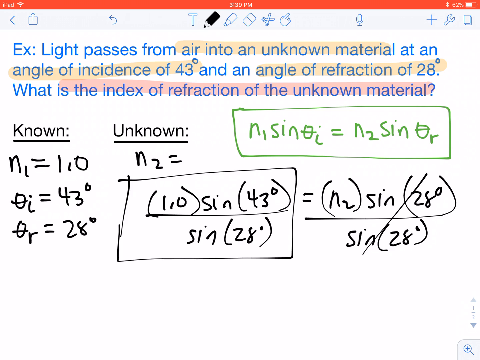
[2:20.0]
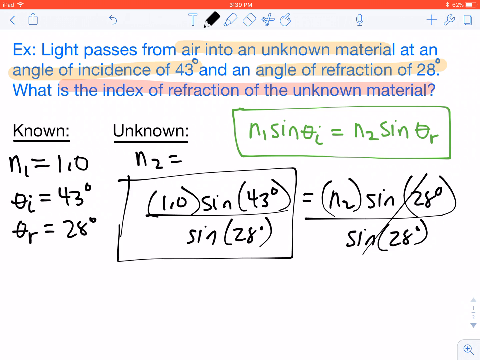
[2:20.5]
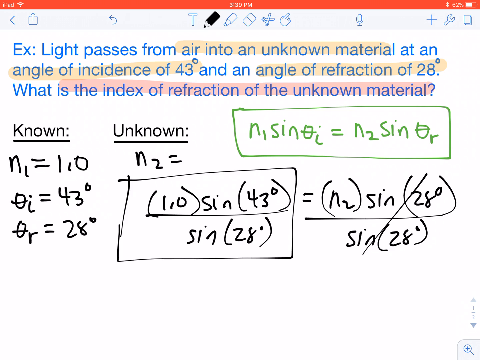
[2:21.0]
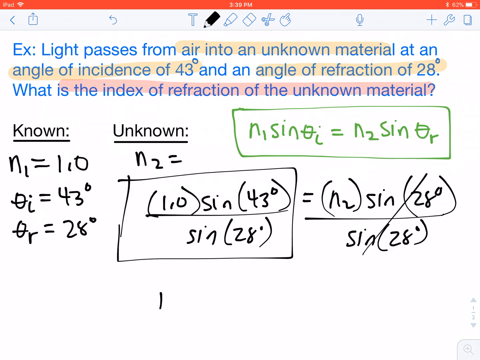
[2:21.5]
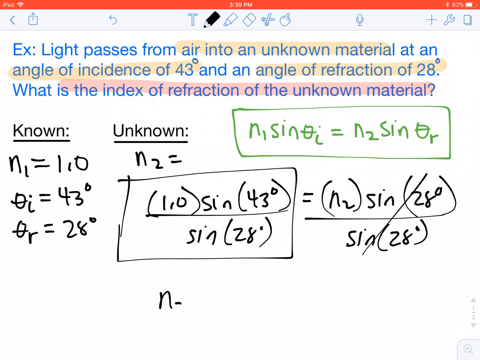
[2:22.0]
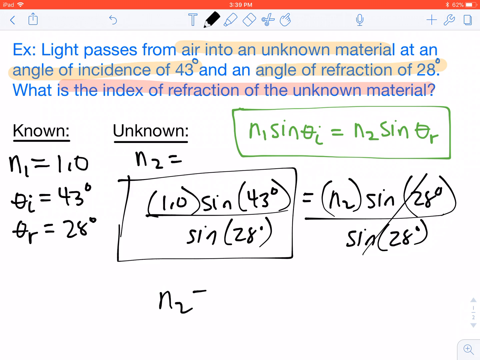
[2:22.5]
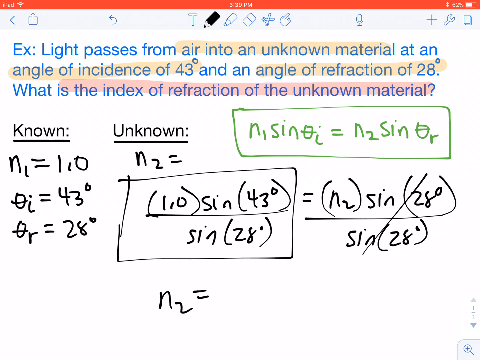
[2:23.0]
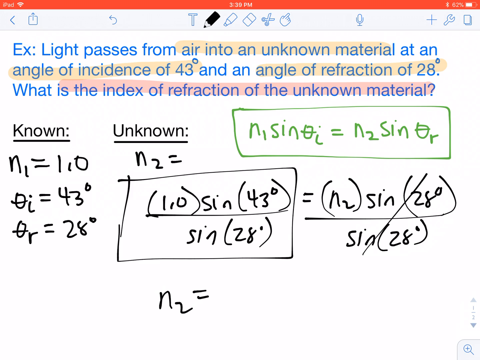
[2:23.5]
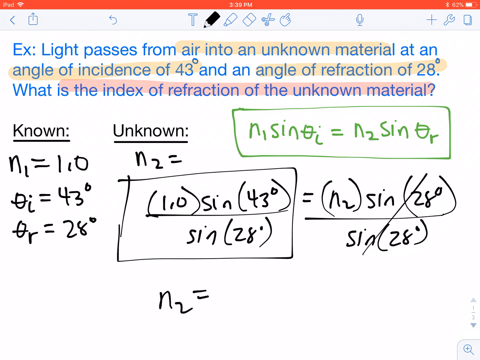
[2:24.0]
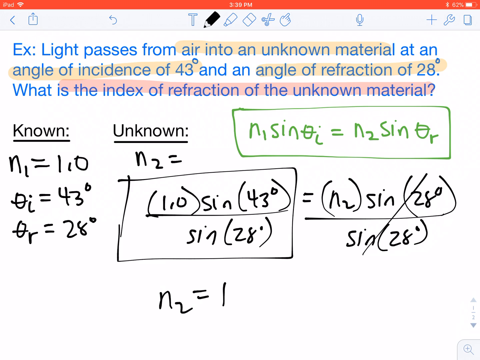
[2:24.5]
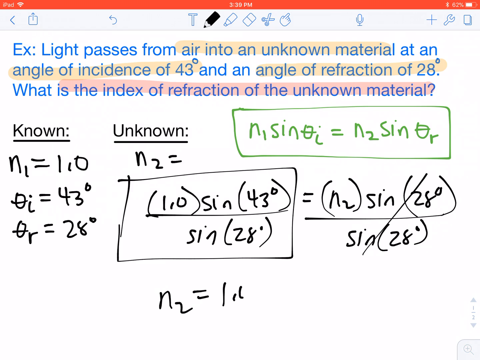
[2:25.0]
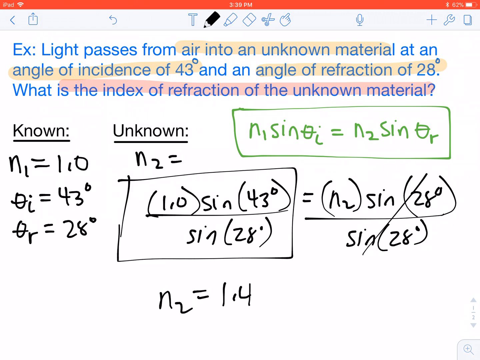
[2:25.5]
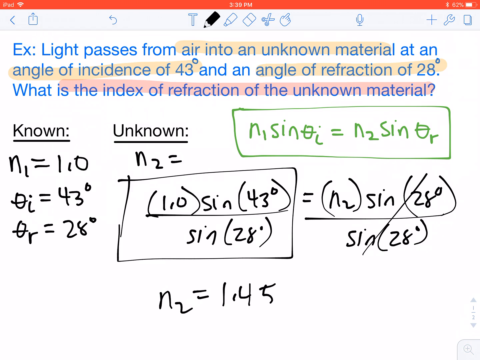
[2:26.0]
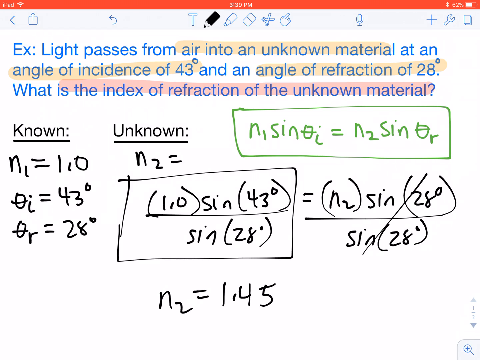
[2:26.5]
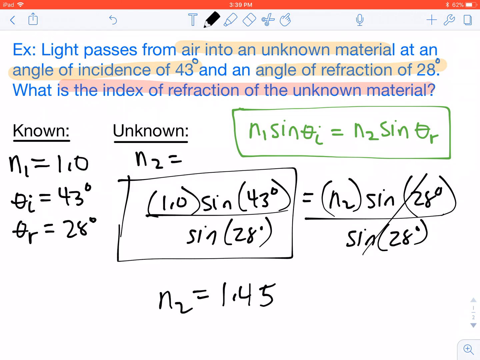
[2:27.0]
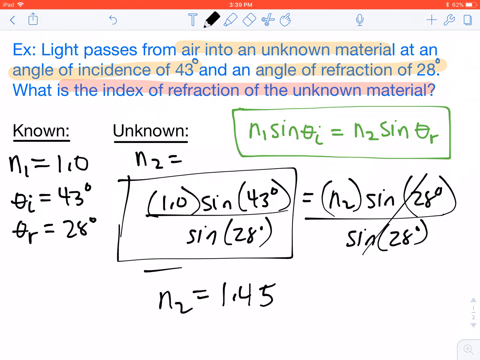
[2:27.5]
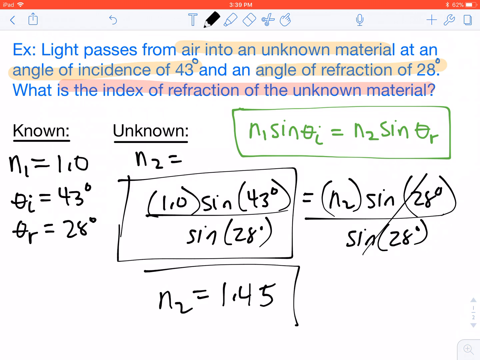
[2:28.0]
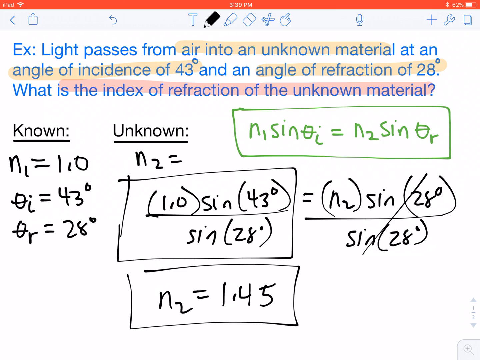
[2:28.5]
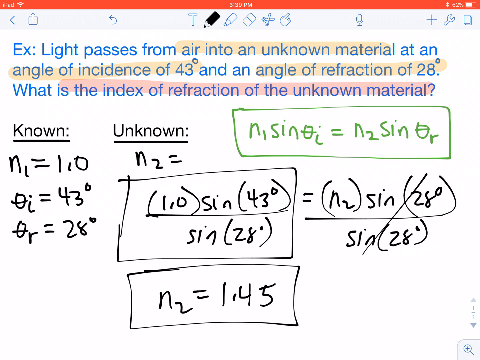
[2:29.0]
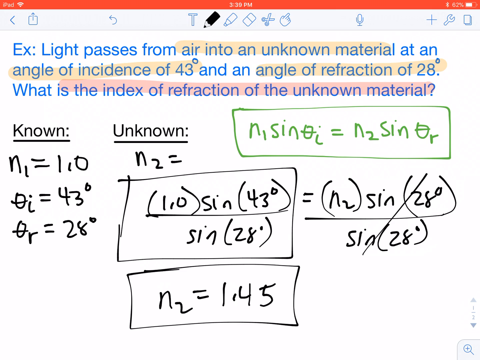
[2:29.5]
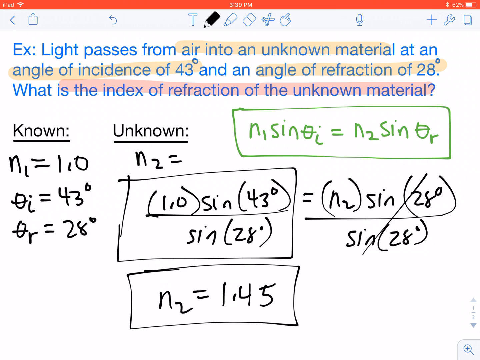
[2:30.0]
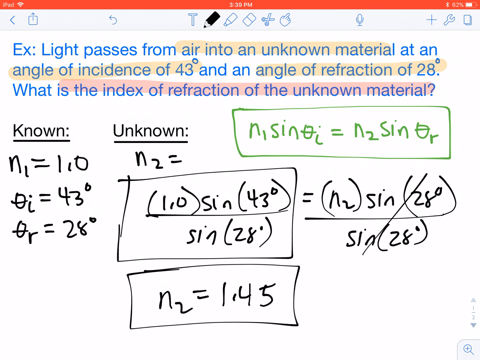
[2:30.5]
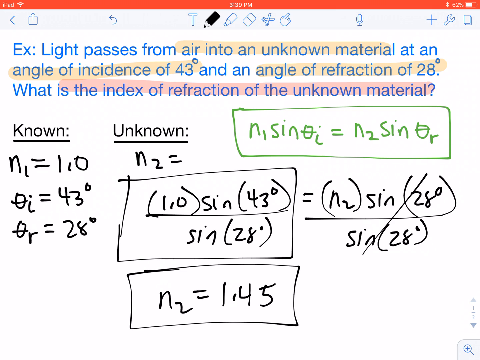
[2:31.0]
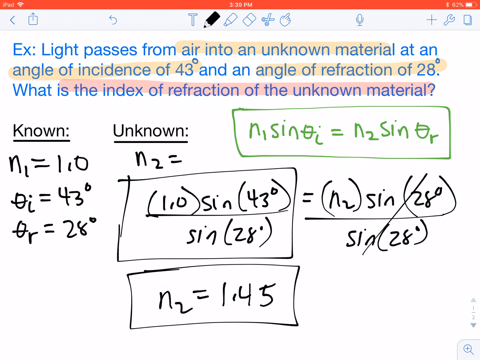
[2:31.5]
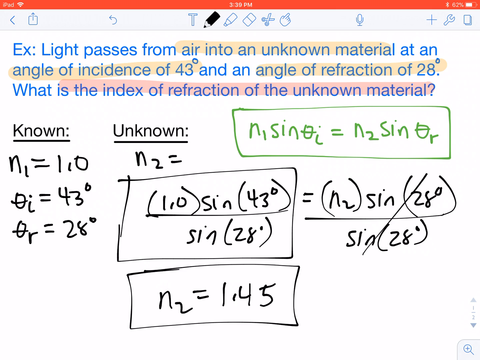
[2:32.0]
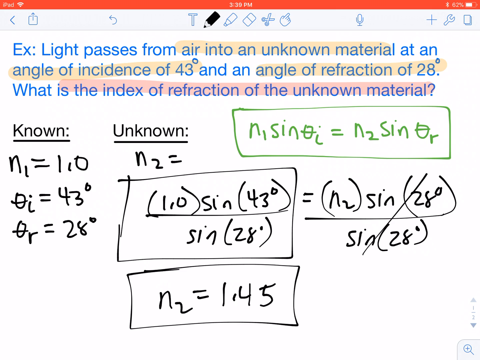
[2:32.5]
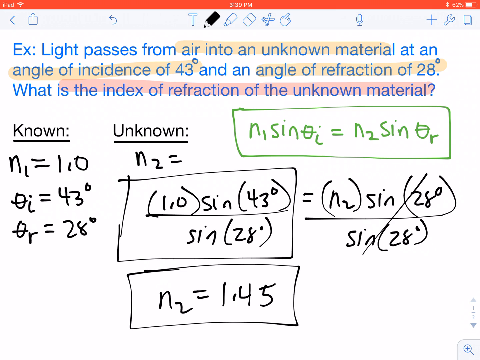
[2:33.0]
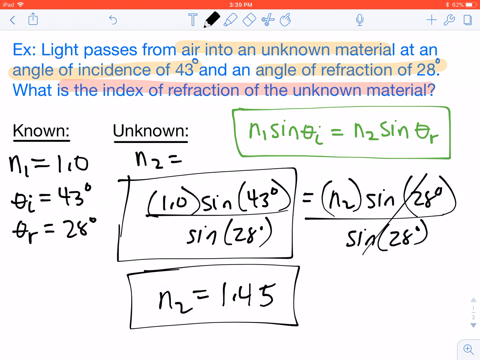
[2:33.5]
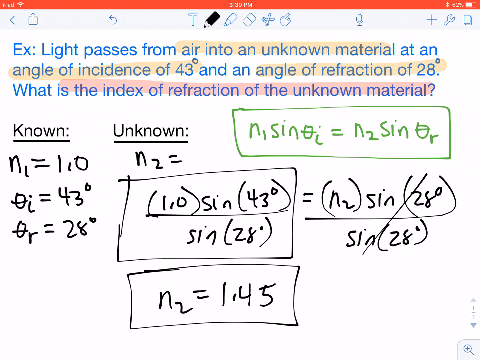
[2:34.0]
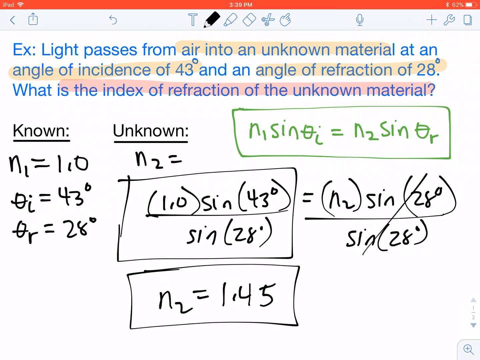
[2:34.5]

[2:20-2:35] At the very bottom the person writes another answer, "N2 = 1.45", apparently the final answer, and circles it in a square just like the previous answer. A couple of different icons are visible, including scissors and an eraser.